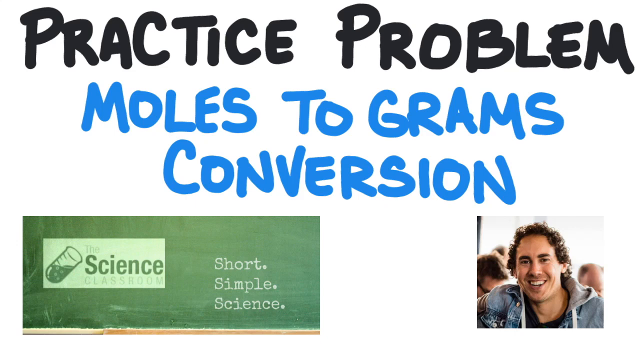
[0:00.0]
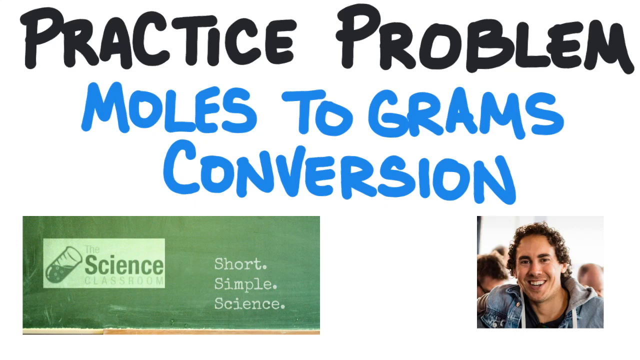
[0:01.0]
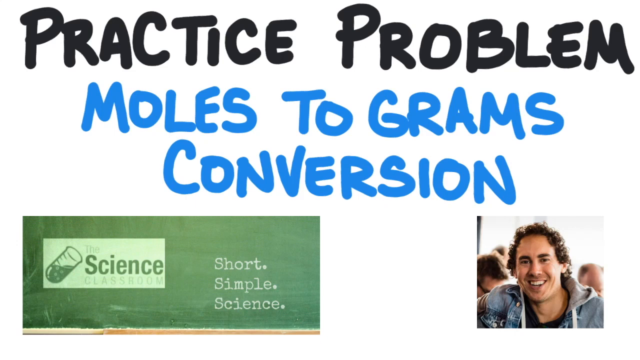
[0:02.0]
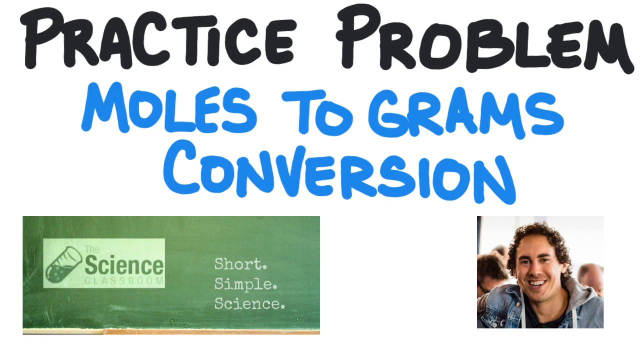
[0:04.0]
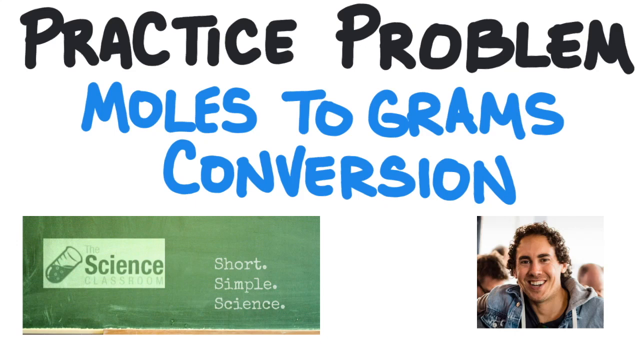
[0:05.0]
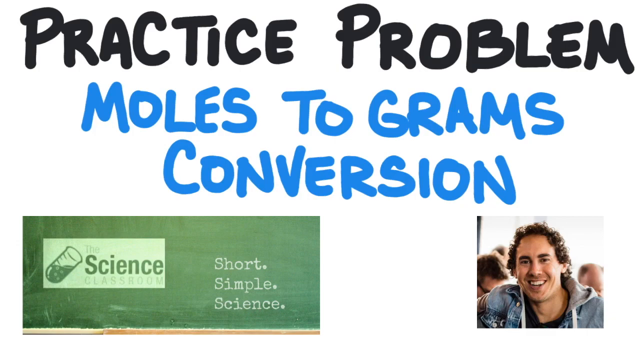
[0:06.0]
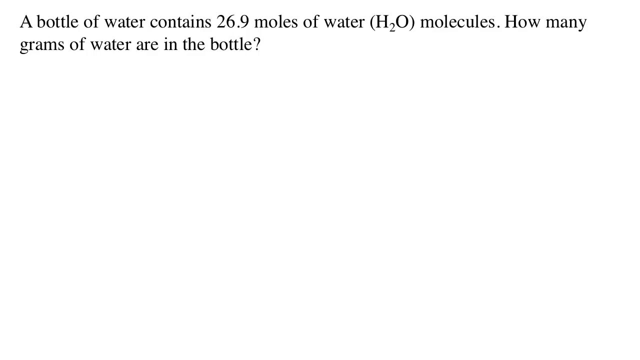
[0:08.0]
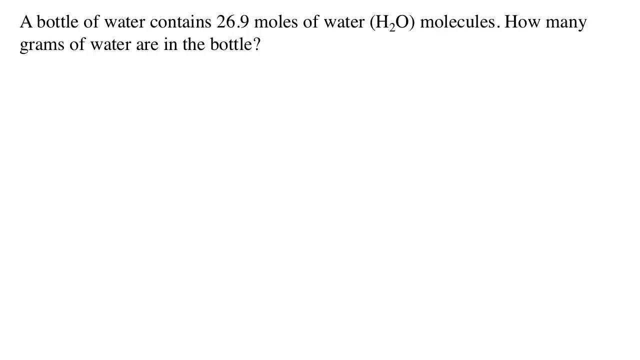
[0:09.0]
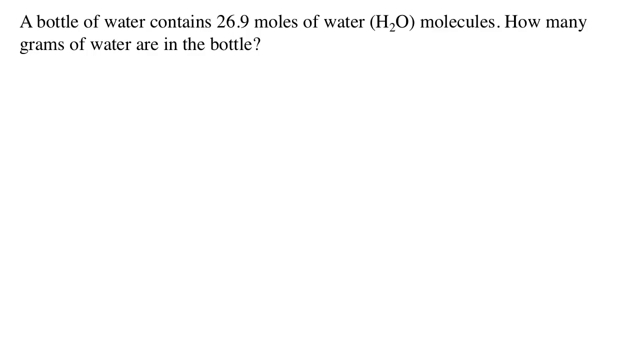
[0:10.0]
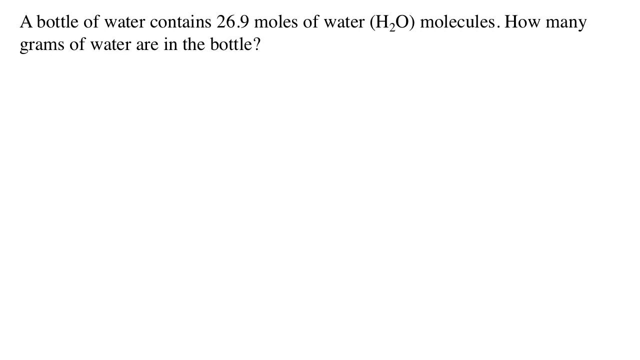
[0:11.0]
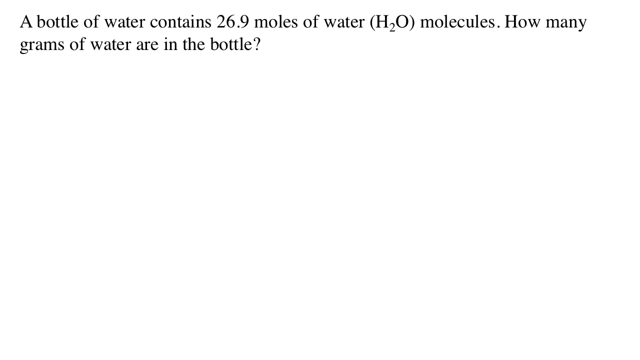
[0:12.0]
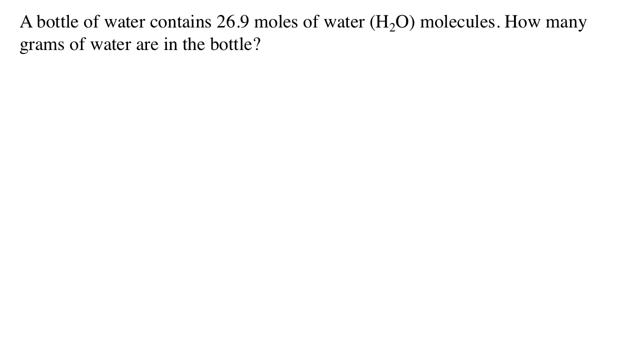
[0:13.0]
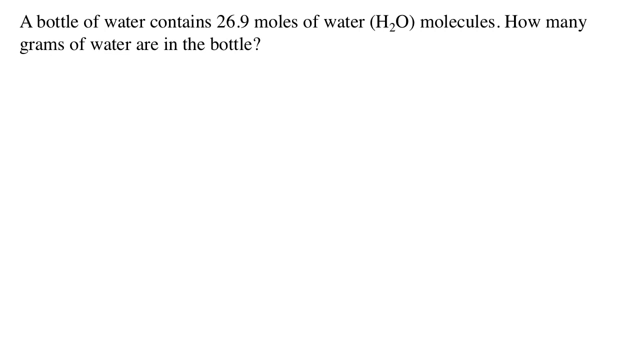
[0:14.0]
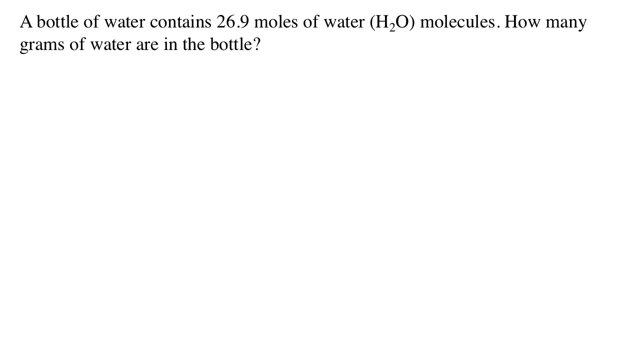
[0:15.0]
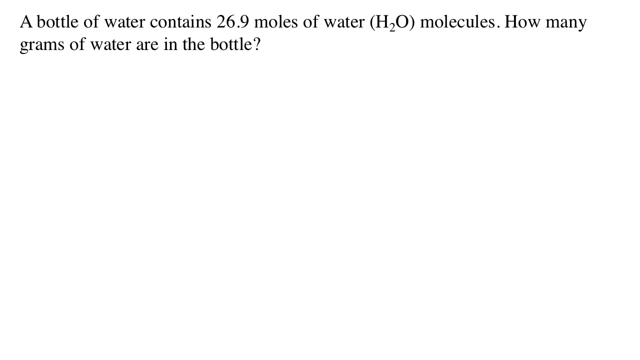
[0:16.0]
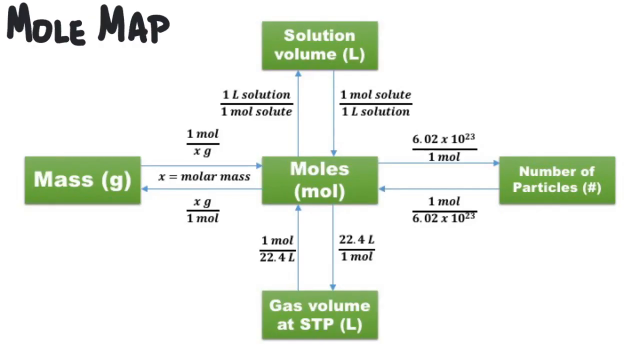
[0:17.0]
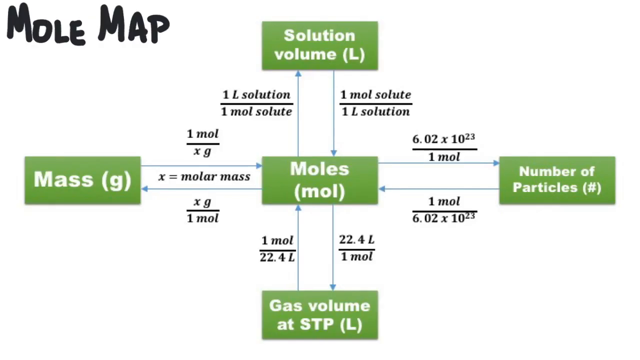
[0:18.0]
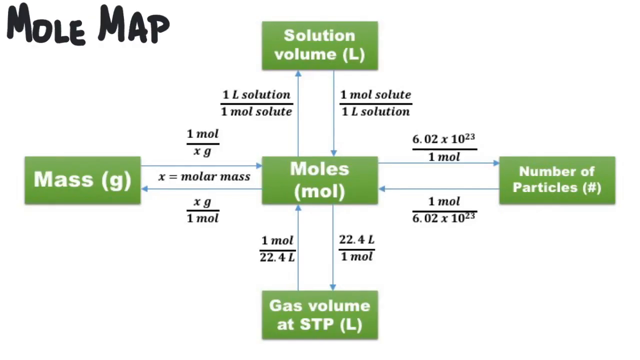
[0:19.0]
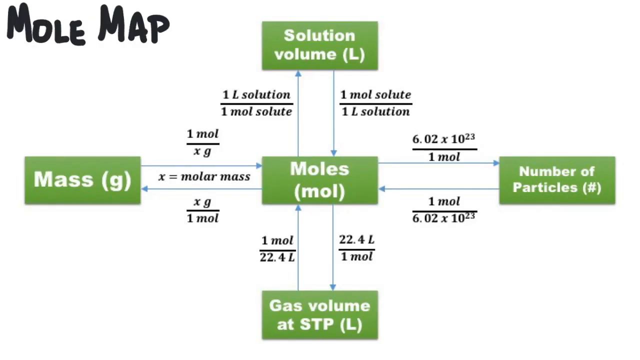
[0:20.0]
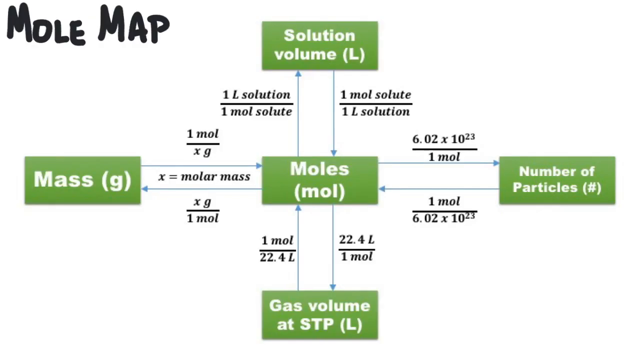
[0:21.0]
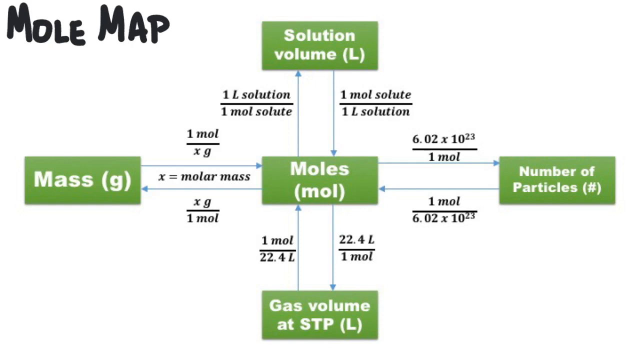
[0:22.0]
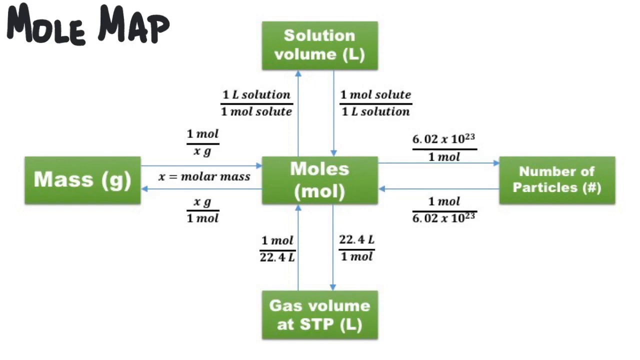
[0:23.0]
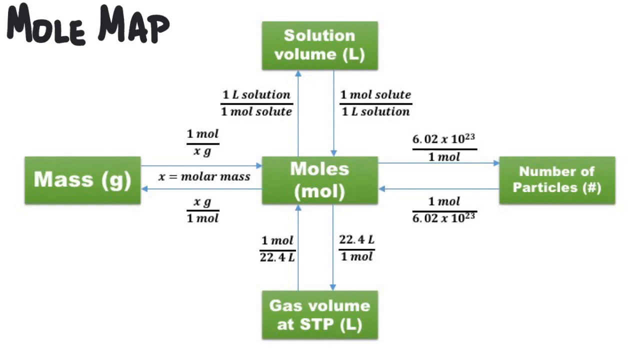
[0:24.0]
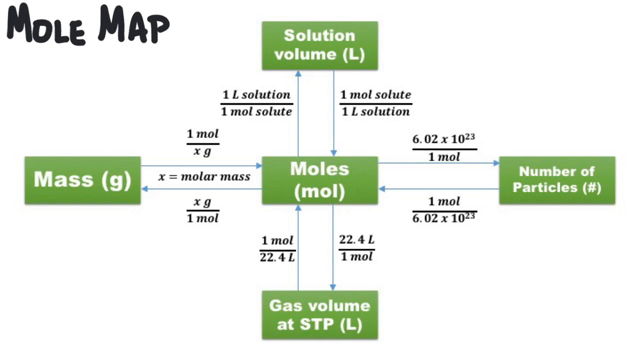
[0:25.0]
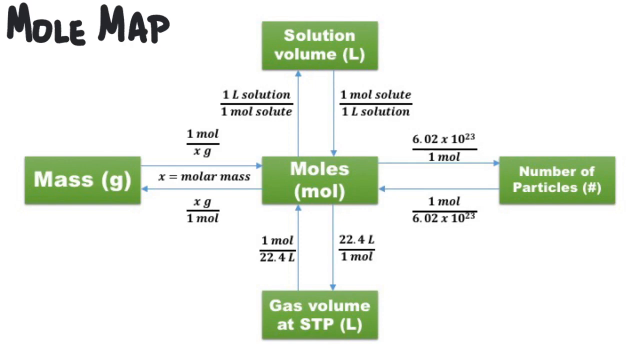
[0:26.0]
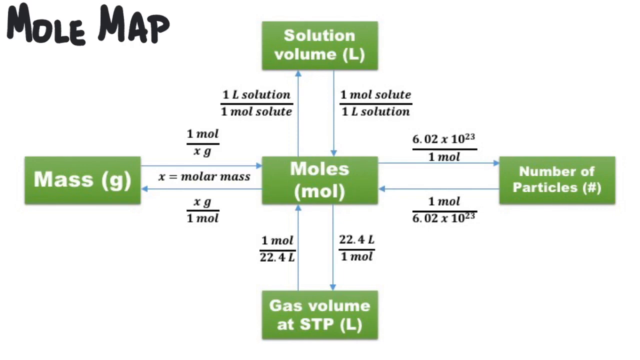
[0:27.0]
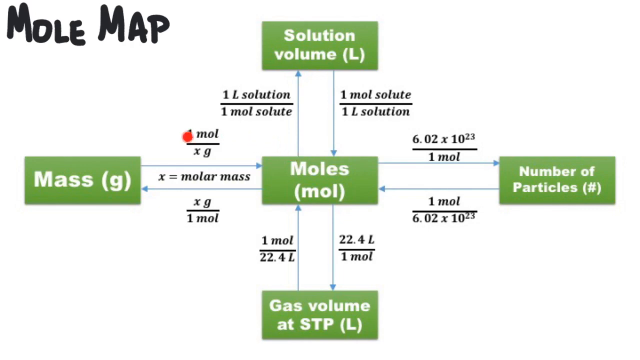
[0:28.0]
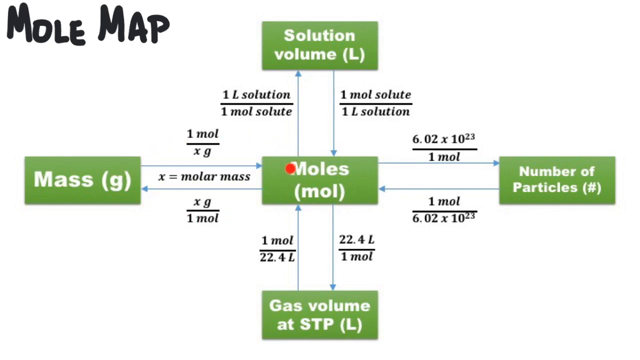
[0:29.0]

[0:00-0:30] The video opens on the topic "practice problem, moles to grams conversion." Below the title are two pictures: one reading "science classroom, short simple science," and, to its right, a picture of a smiling curly-haired man wearing a jeans jacket. The next slide presents a problem to solve: "A bottle of water contains 26.9 moles of water, H2O molecules. How many grams of water are in the bottle?" Another slide follows with a mole map showing "solution volume," "moles," "mass in gram," "number of particles" and "gas volume at STP." The man points things out with a red dot on the screen, and "x is equal molar mass" appears. Some units are visible on the map.